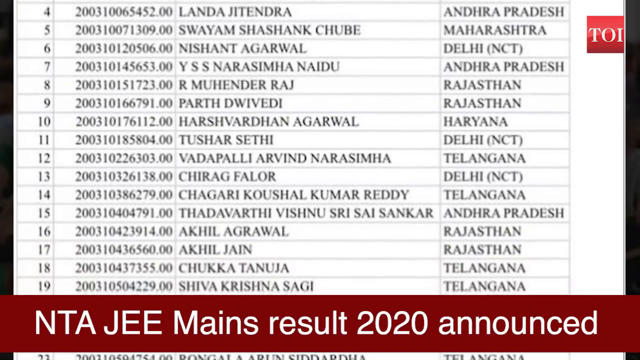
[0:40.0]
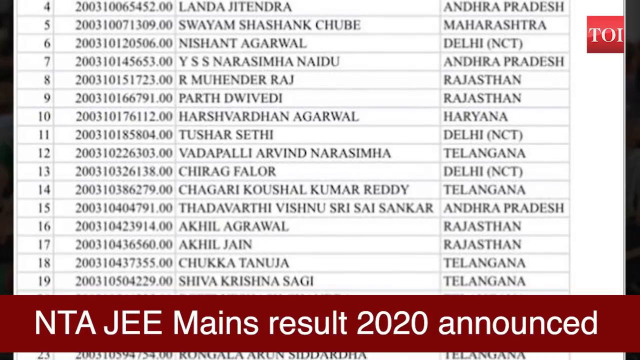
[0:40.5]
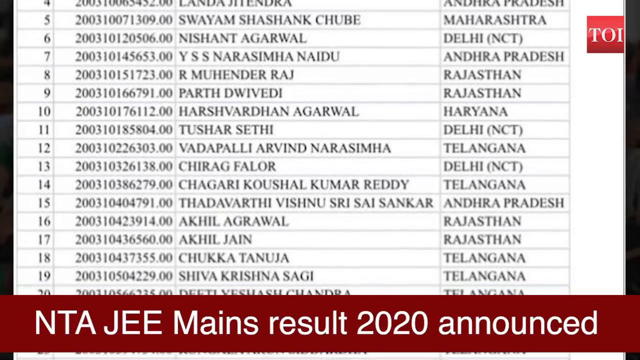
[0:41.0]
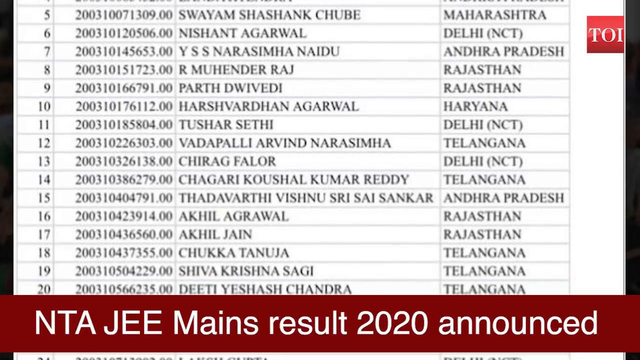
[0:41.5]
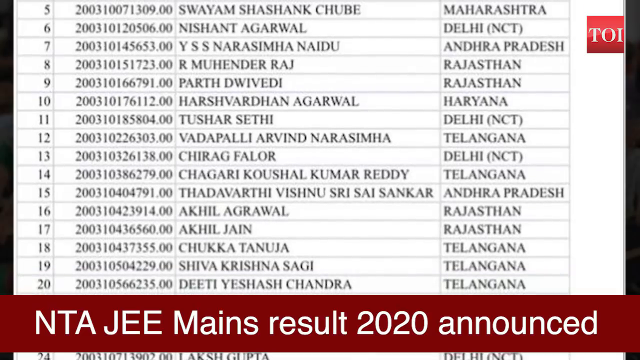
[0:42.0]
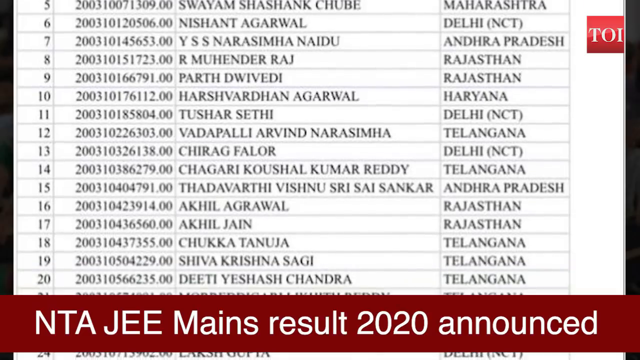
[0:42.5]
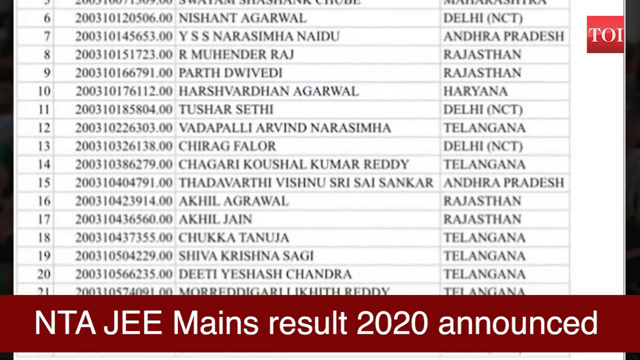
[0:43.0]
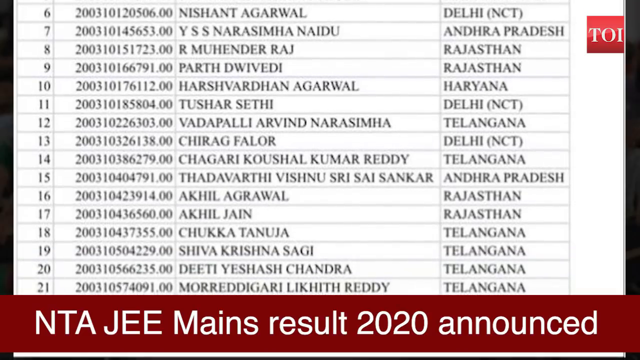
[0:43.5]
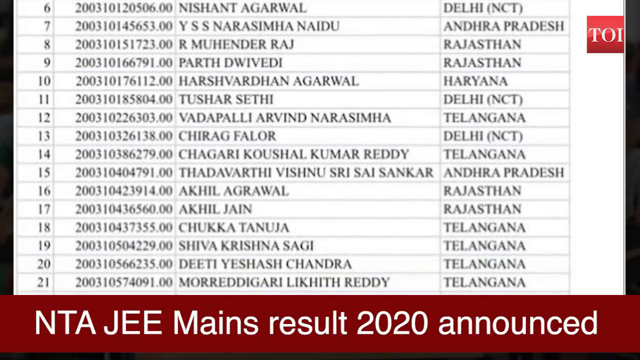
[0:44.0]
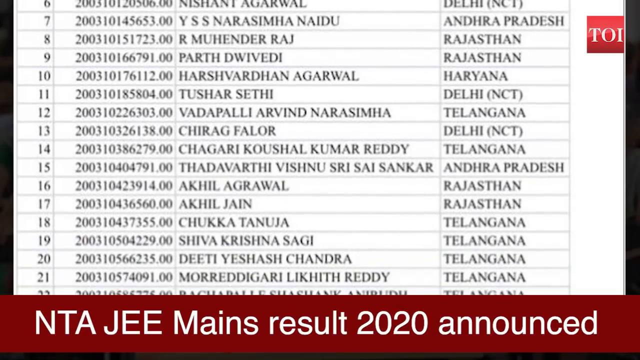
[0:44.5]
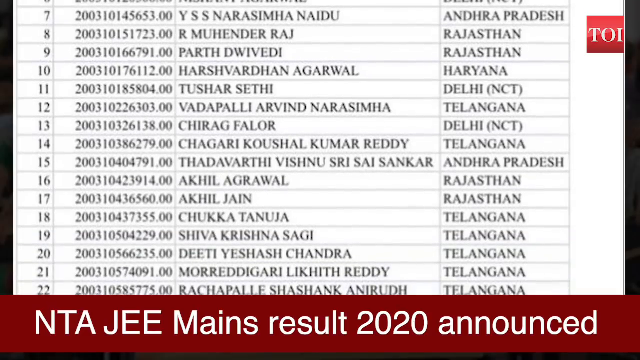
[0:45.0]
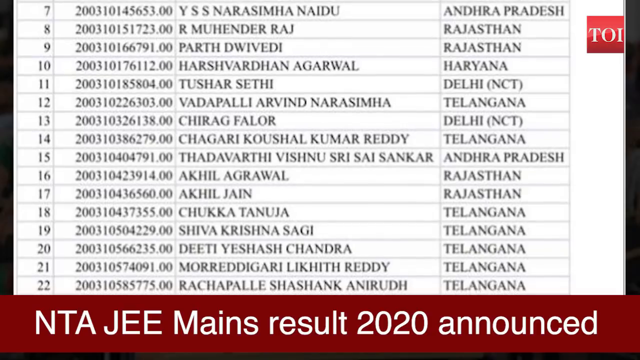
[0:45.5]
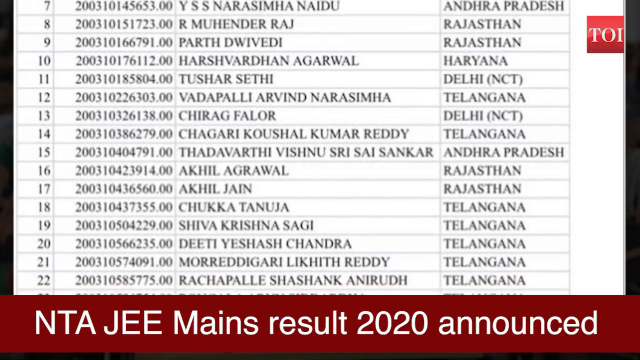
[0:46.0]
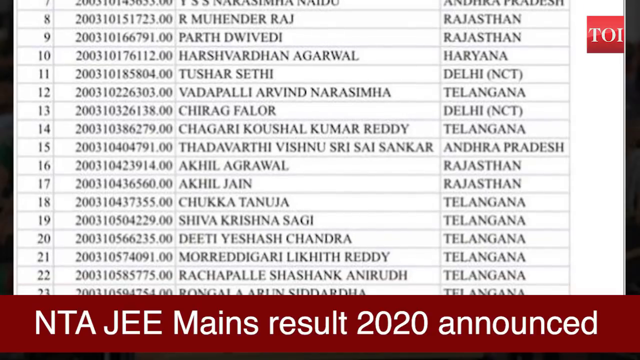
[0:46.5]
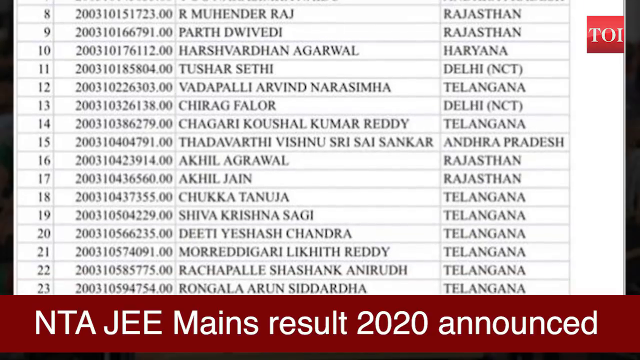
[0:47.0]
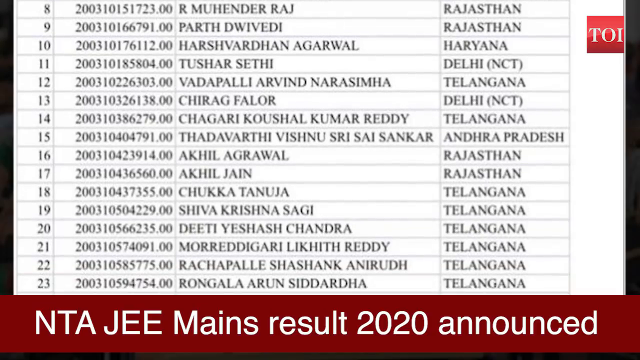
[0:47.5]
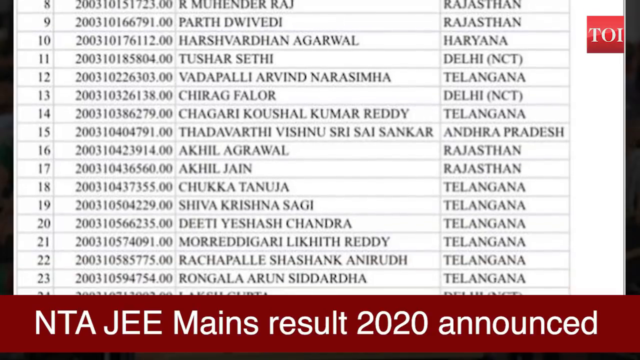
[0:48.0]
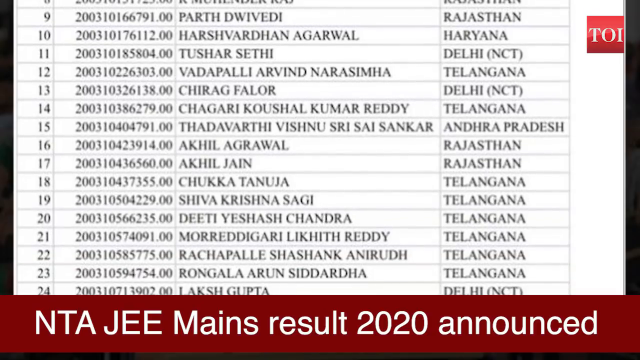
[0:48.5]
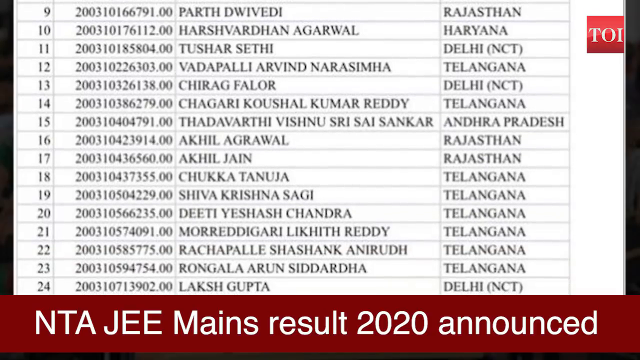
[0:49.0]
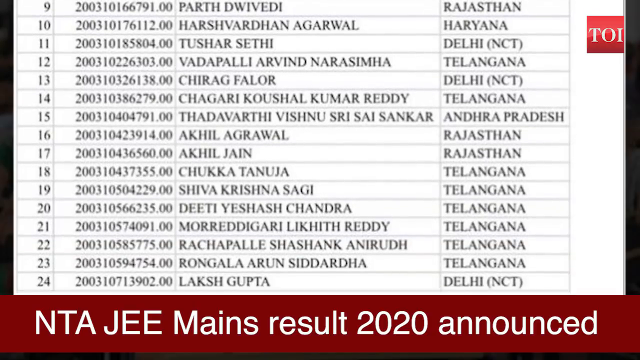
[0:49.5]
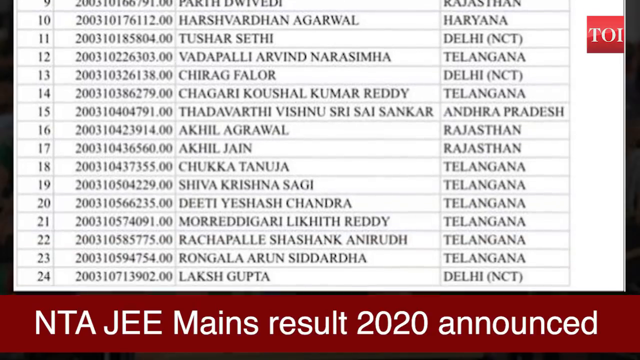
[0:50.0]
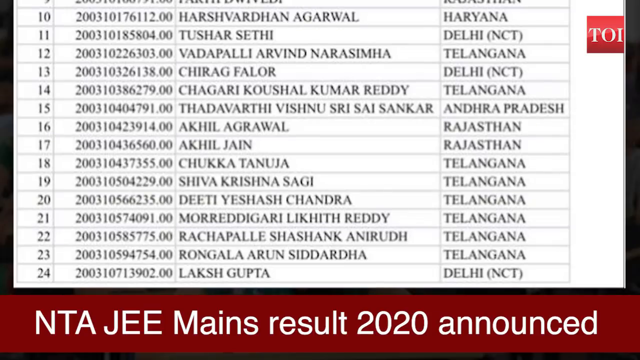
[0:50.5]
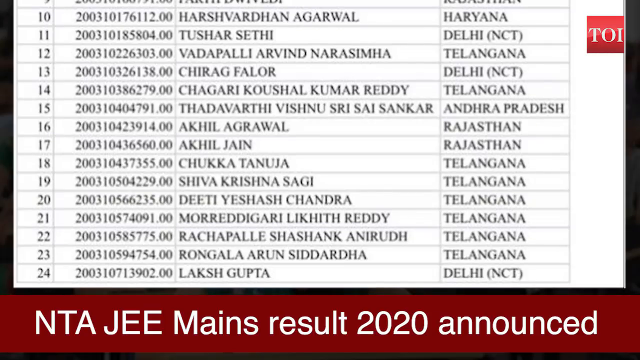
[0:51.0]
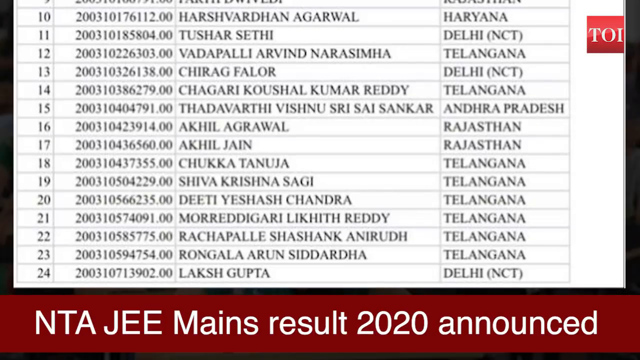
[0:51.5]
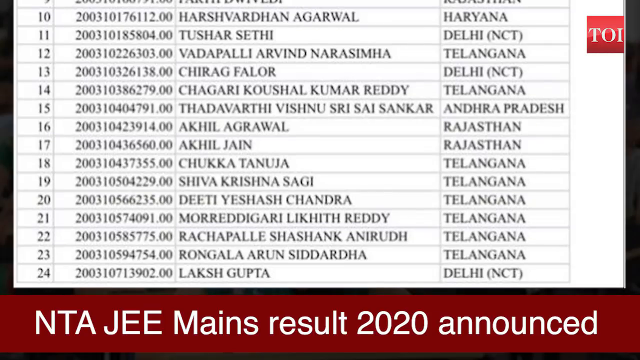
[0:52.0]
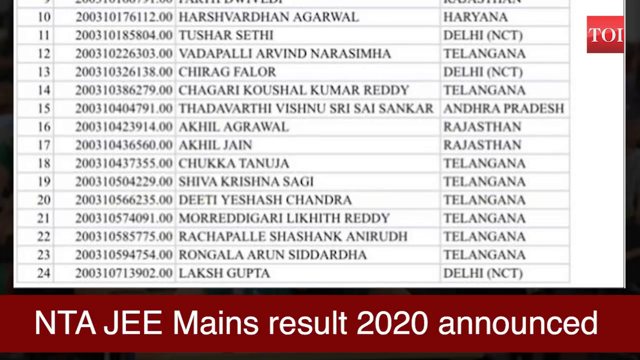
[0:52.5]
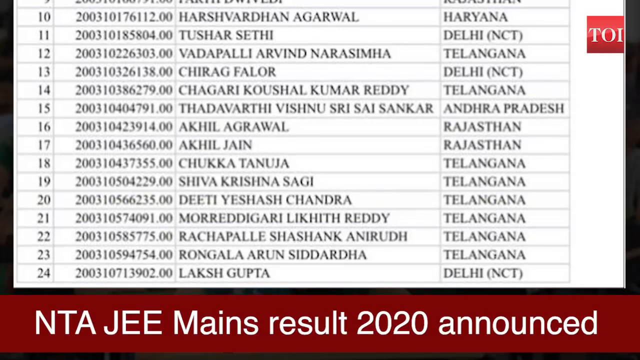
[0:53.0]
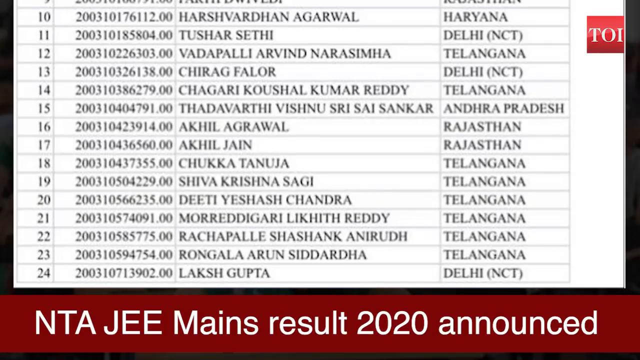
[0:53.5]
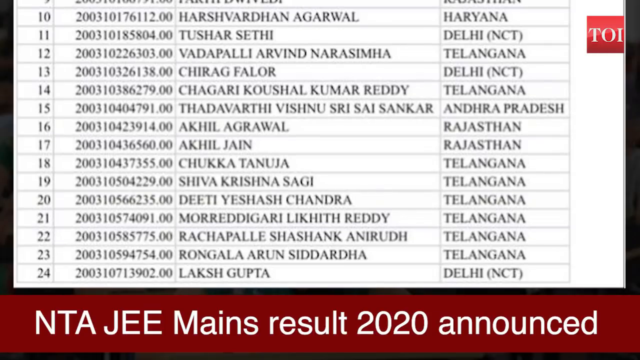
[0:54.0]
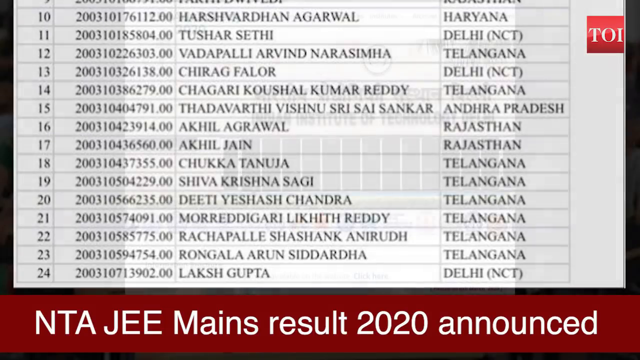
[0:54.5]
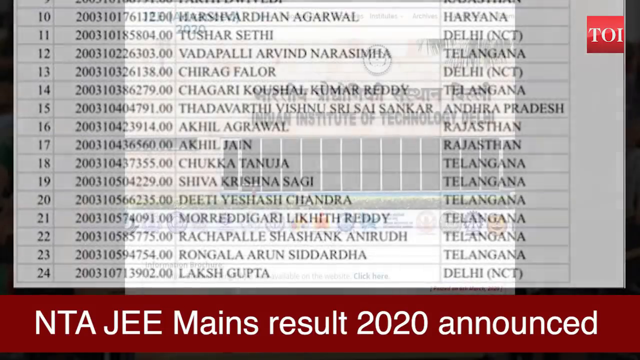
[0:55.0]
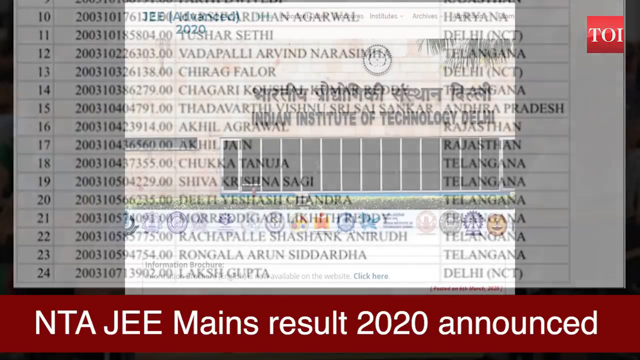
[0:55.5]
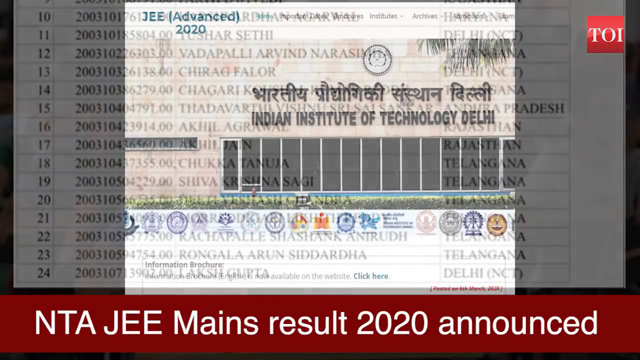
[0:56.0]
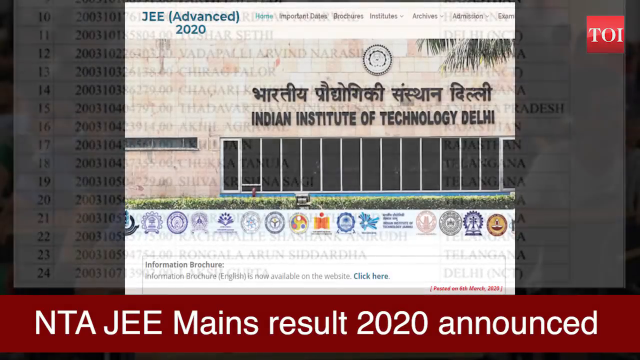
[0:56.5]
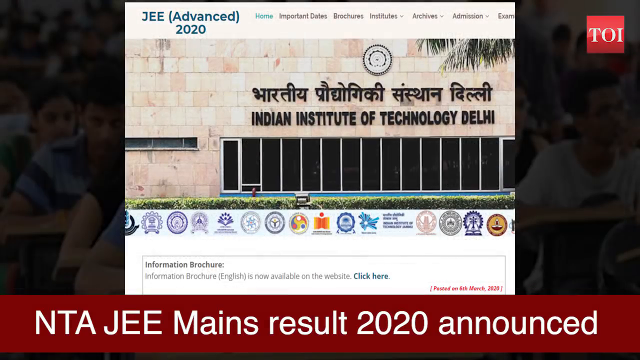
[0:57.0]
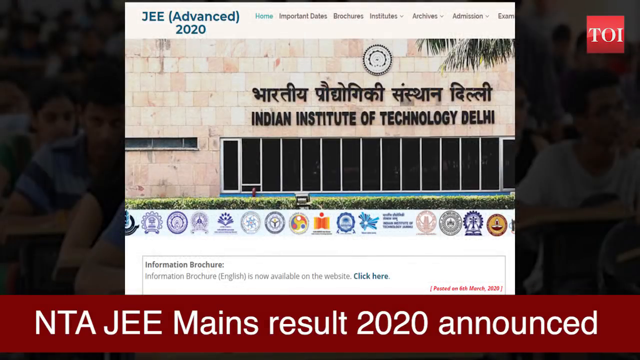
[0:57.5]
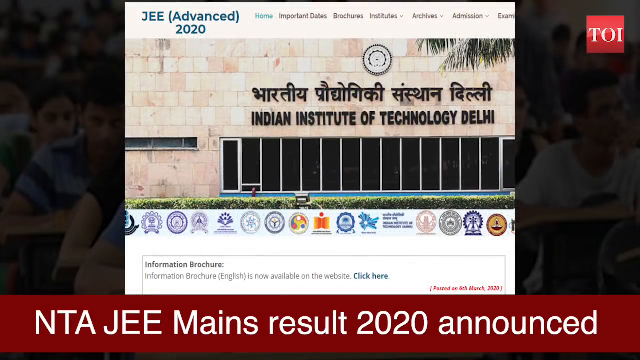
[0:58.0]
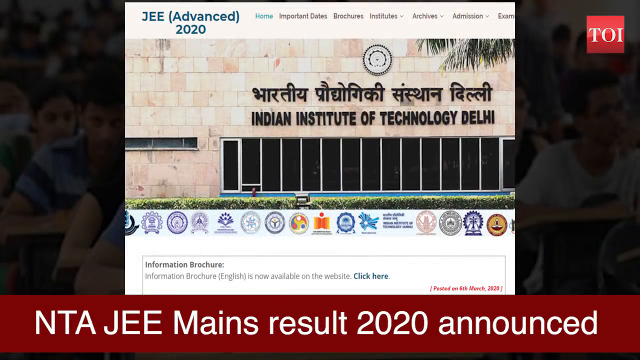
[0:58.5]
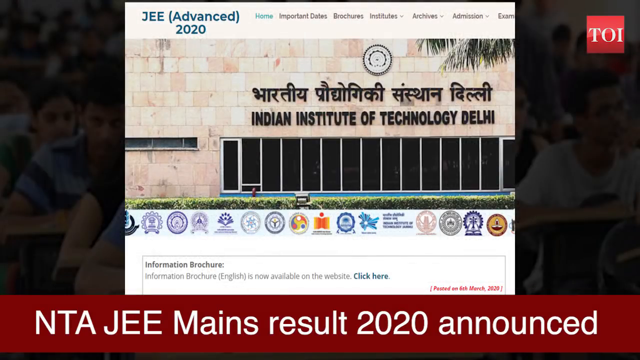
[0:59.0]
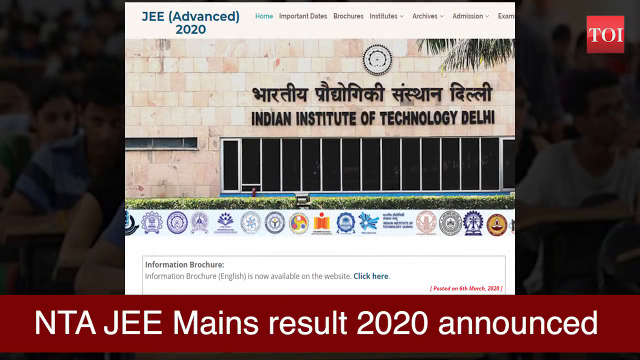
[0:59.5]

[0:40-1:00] The list continues all the way down to number 24, apparently indicating 24 candidates taking this presumed test. After the candidates' names, application numbers and regions, the scene shifts to the outside of a brown brick building. Toward the right side of the building, black lettering reads "Indian Institute of Technology Delhi". Above the sign appears to be the same text written in the native Indian language, and above this is a black circle emblem centered in the middle of the black lettered signage. A green hedge runs along the base of the building, and just above the hedge is a series of darkened windows, each approximately three feet wide by approximately 8 to 10 feet high.